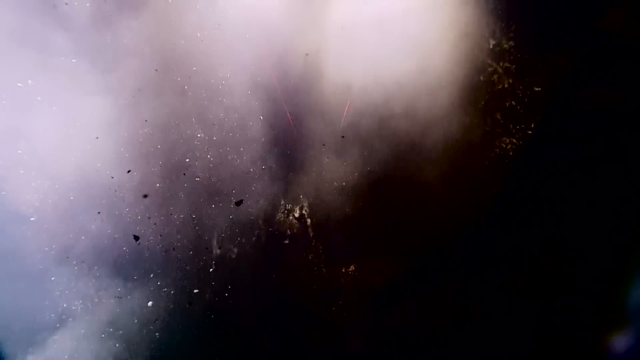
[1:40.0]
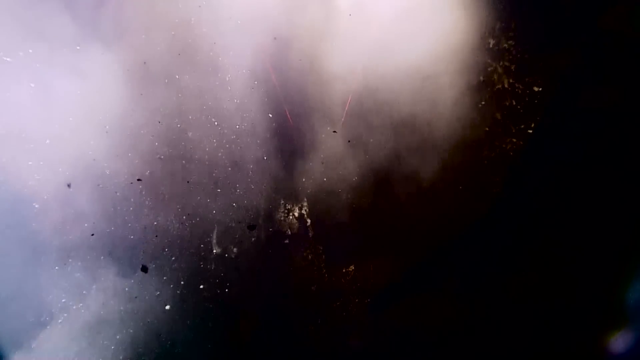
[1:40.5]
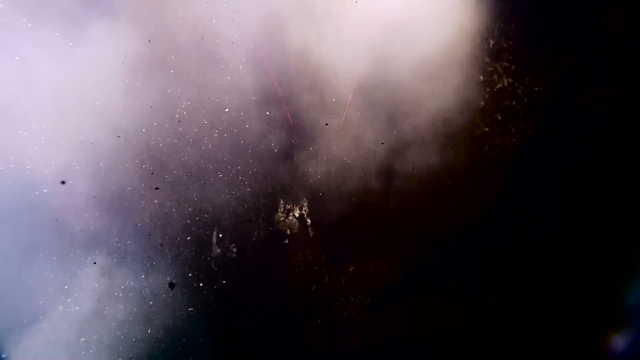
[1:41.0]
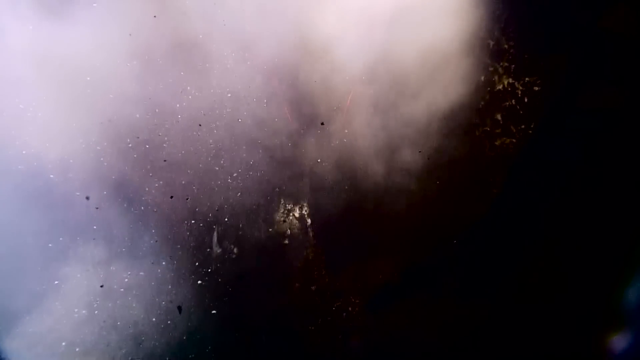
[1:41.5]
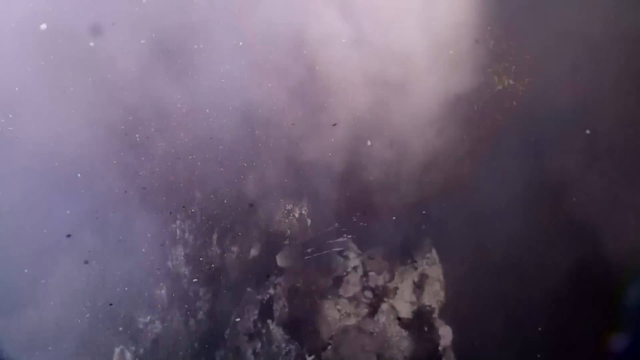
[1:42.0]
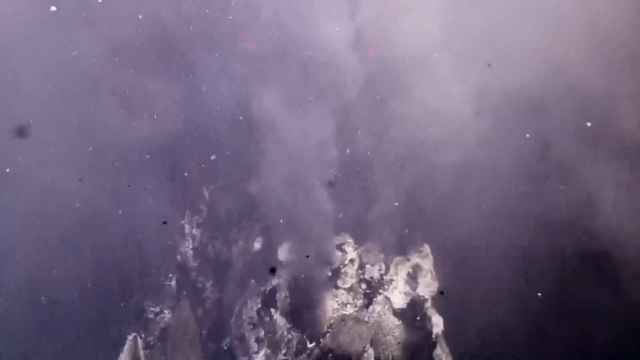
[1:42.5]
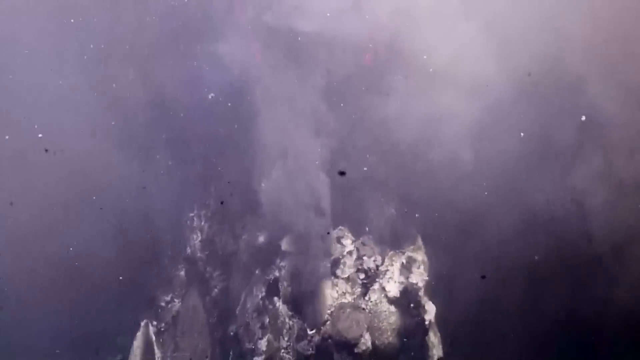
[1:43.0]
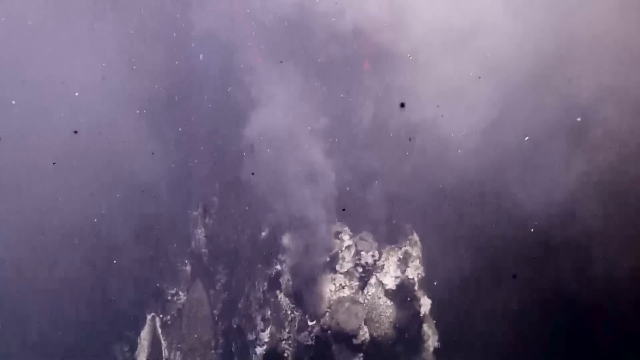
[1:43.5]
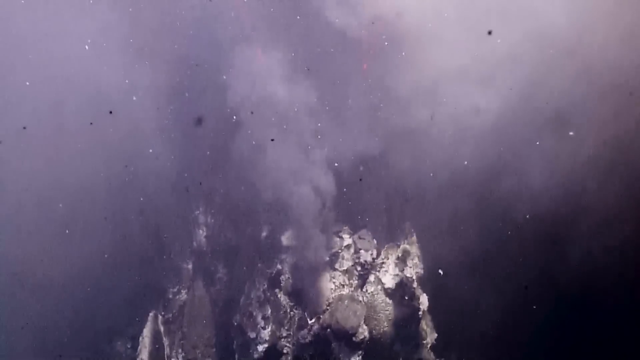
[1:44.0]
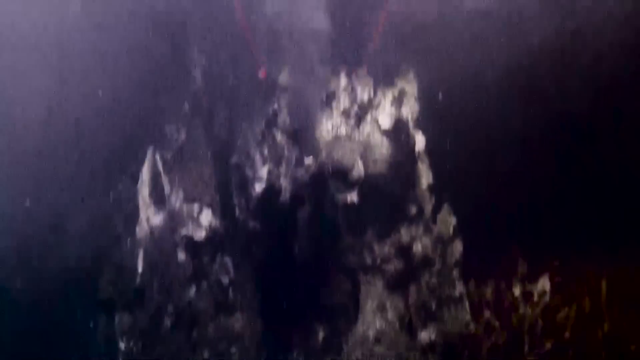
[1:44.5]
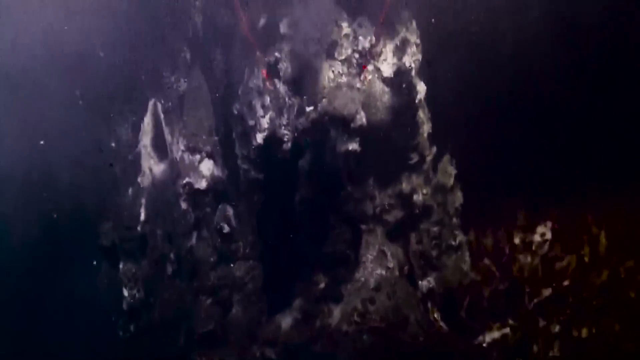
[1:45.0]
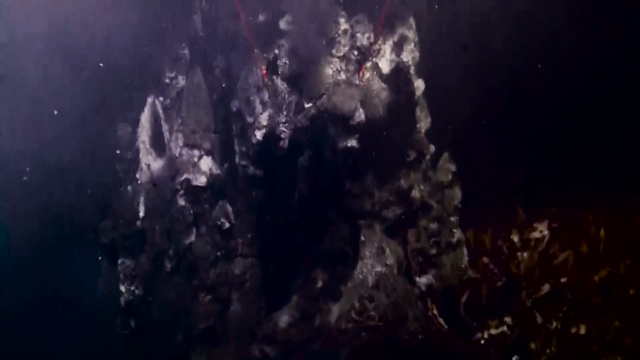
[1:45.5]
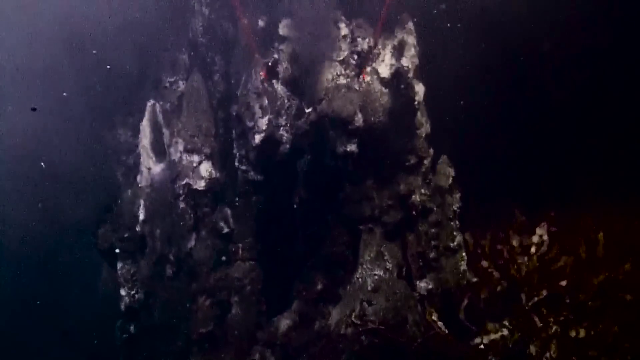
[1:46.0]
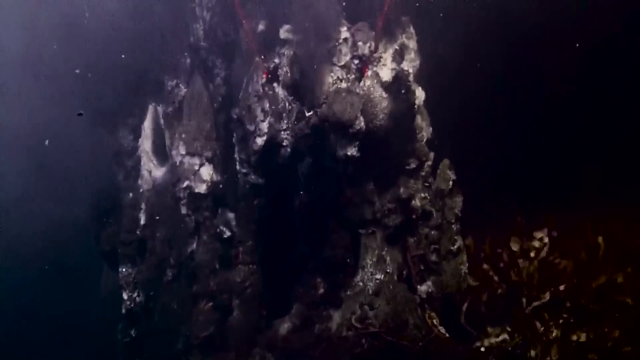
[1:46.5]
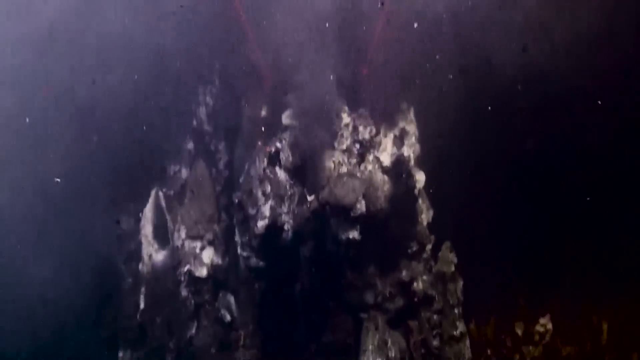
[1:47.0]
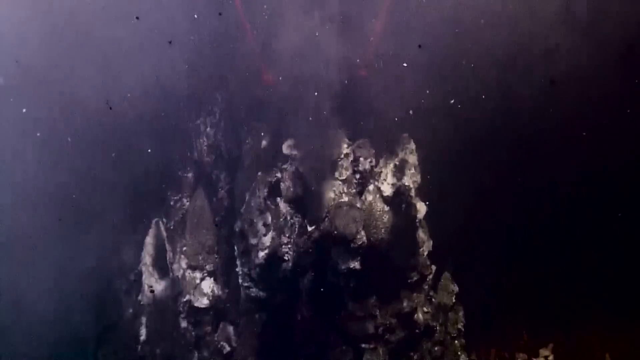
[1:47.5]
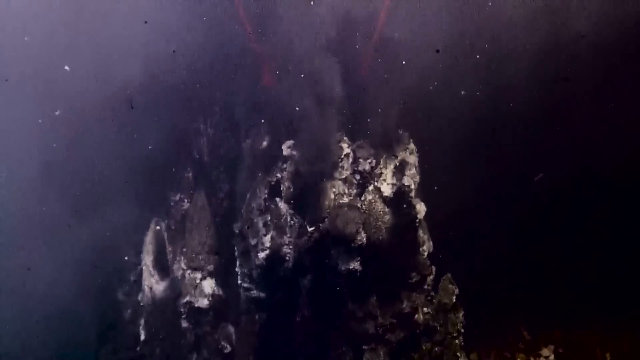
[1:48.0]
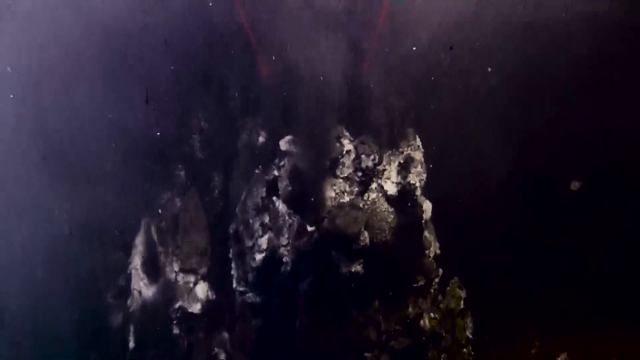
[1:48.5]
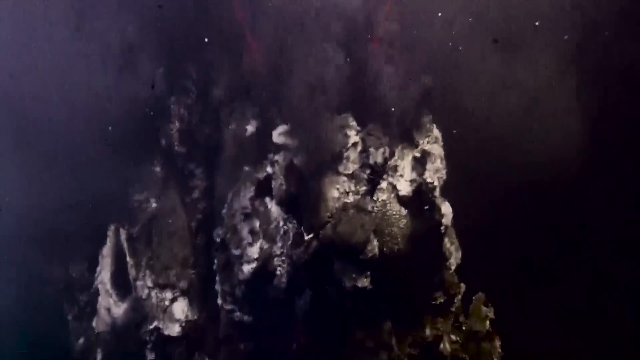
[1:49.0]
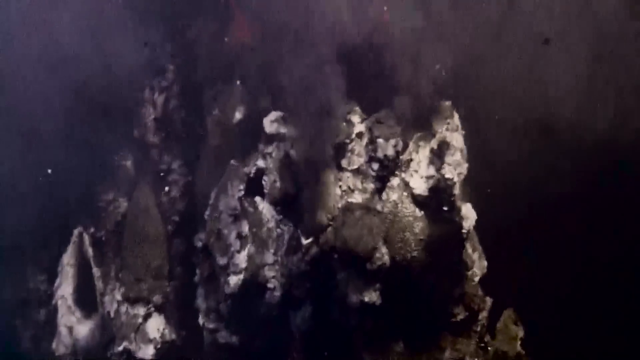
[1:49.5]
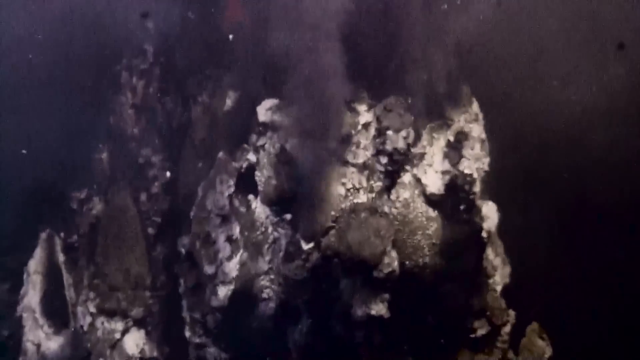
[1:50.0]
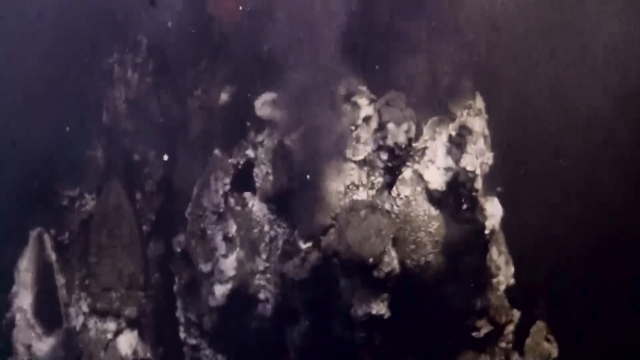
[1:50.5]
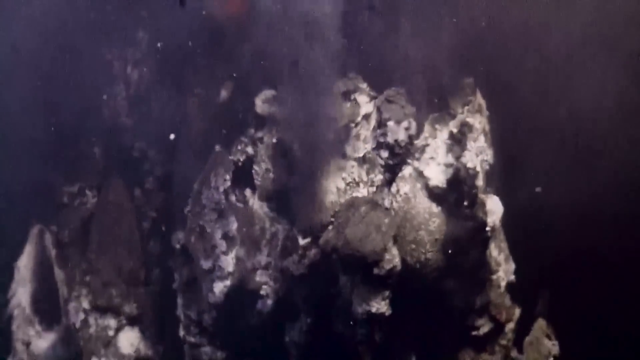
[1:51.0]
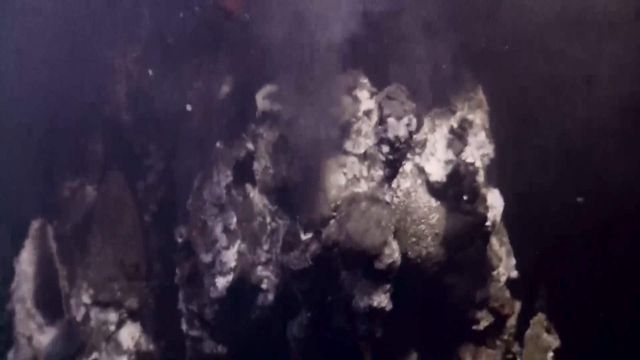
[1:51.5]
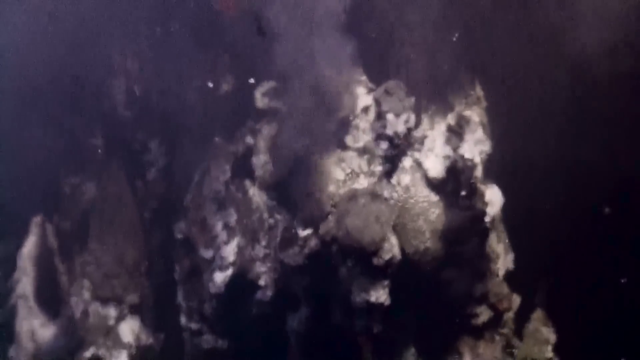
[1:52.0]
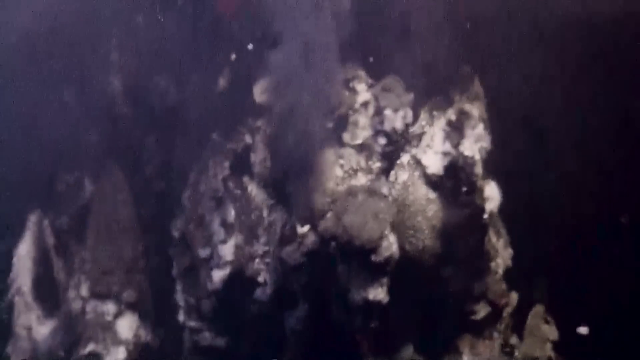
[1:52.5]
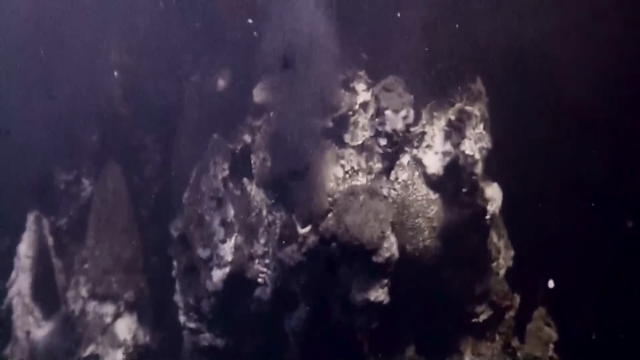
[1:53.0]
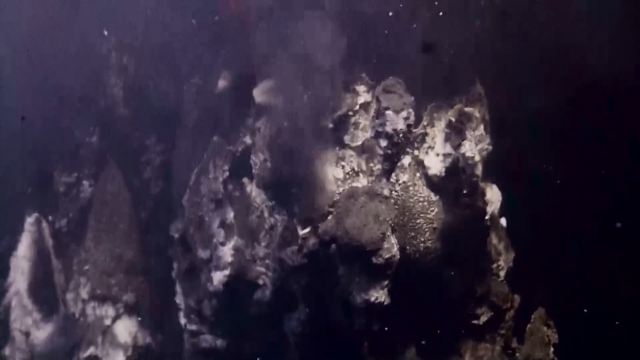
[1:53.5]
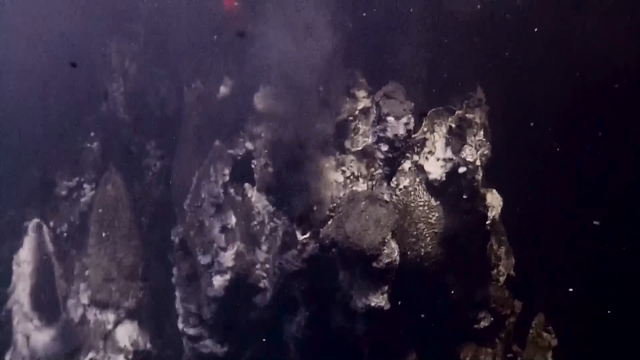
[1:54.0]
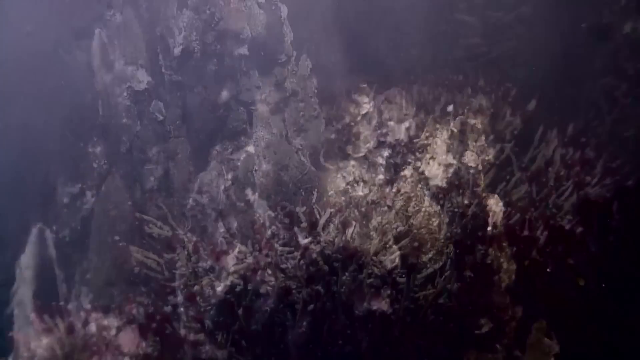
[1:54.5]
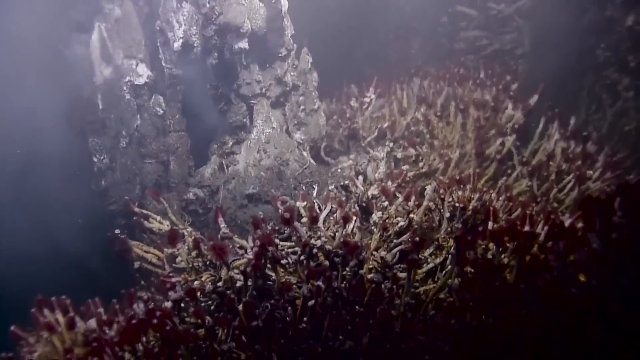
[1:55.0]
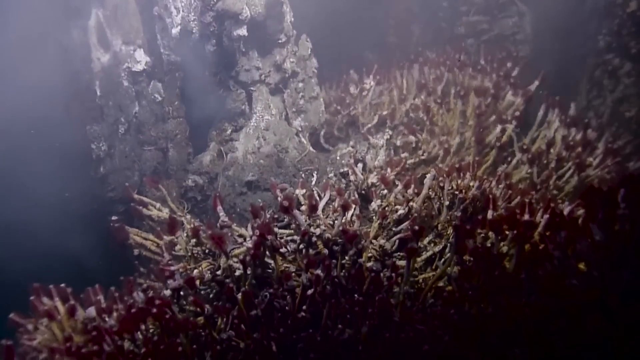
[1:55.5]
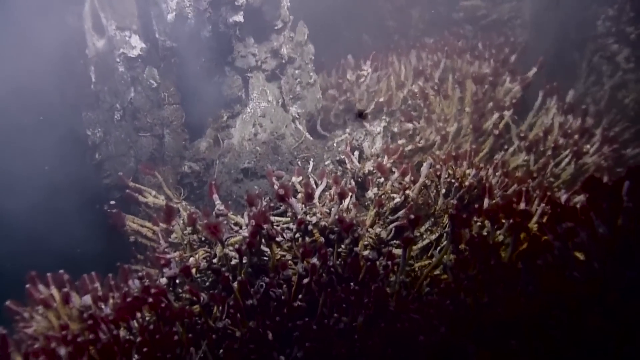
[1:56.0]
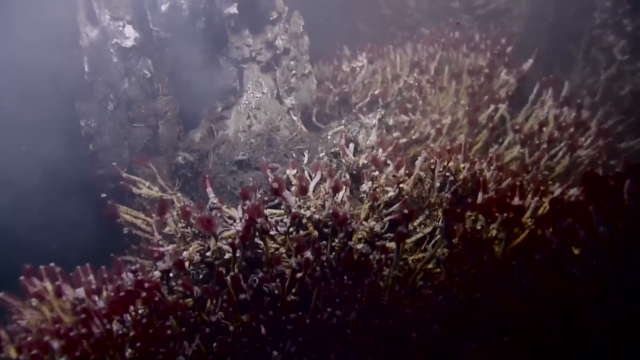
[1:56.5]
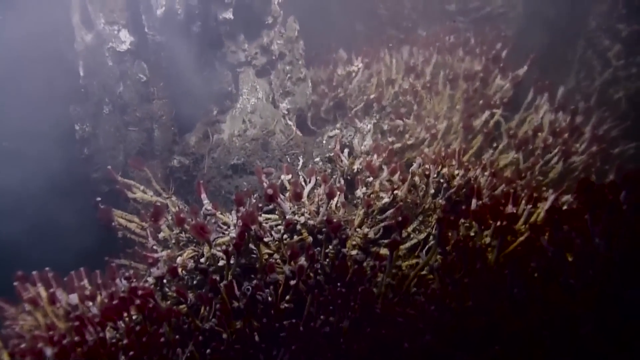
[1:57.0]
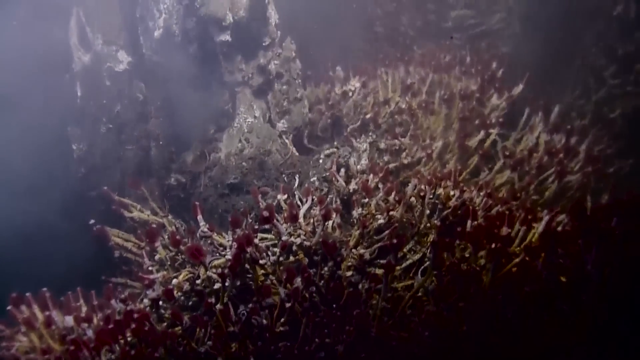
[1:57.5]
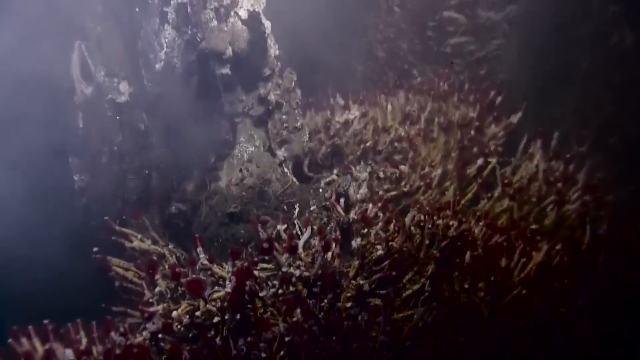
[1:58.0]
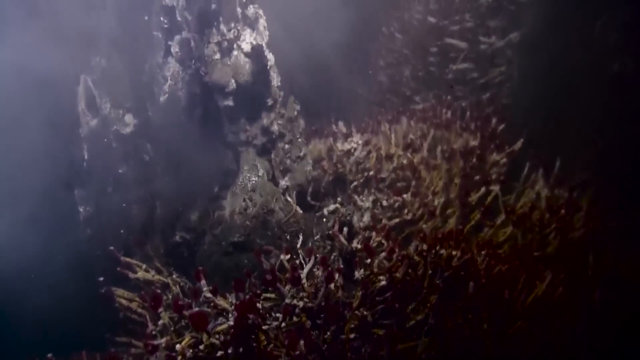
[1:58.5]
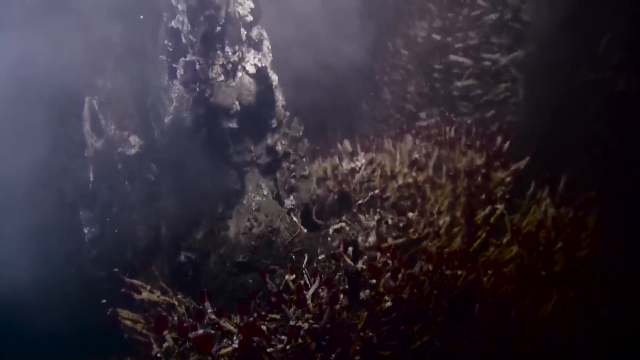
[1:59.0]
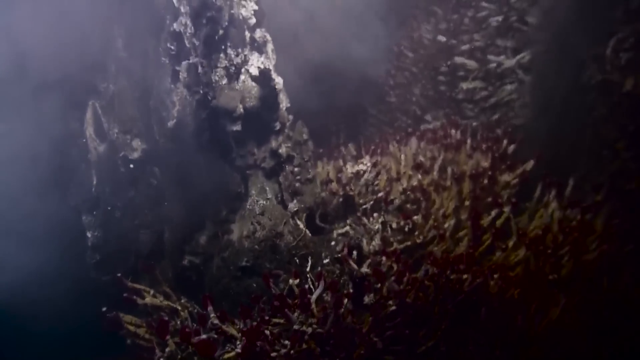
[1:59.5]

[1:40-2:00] What looks like smoke is in the water; it is whitish at the bottom and bluish, with what look like black and white particles all around it. The background is black, and there are some gold pieces of something. Then part of the rock appears at the top, and it looks like smoke is coming out of it. The smoke is a very dark grey, and the rock looks white and silver and appears to have mould. The camera moves down, showing more of the rock, which looks like it is burning. The smoke then changes to black, and some red appears in the background. The view zooms in on the rock, showing more smoke and rock, and some particles that move about or could be underwater creatures. Yellow and red coral is around the rock as the camera moves slowly up and down.